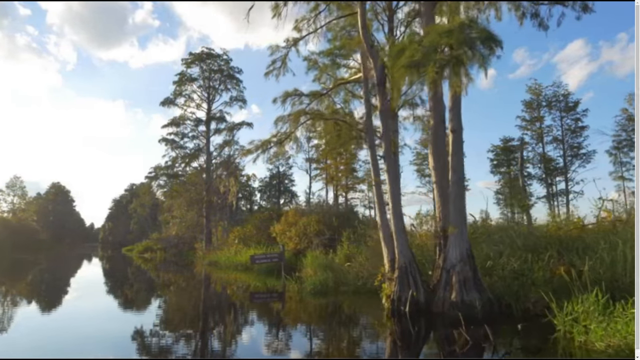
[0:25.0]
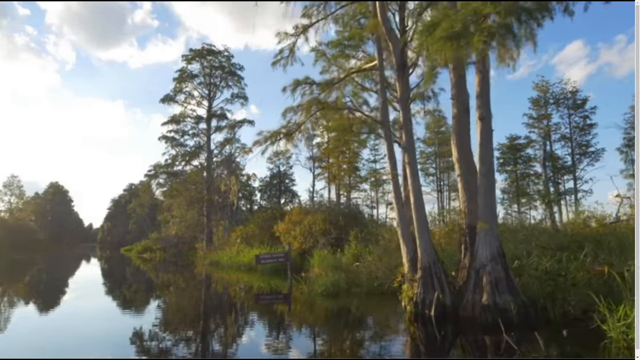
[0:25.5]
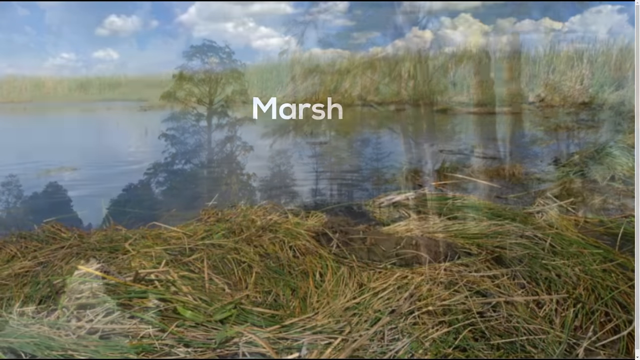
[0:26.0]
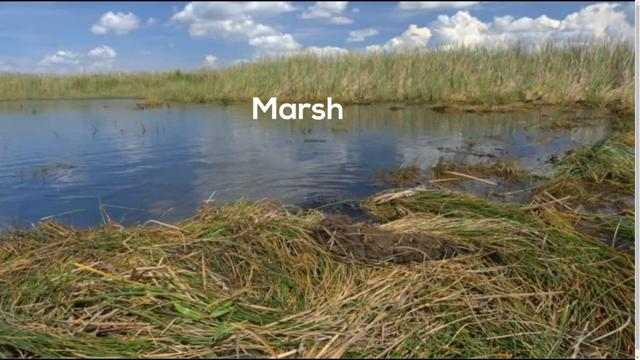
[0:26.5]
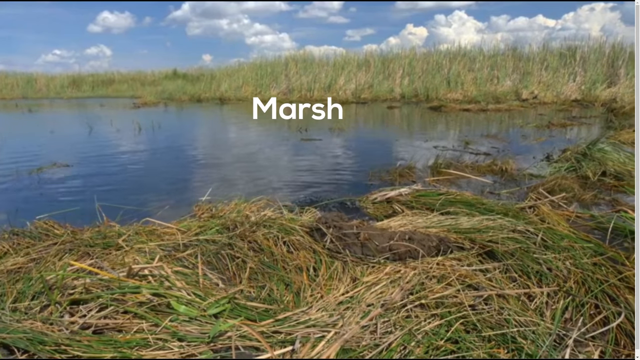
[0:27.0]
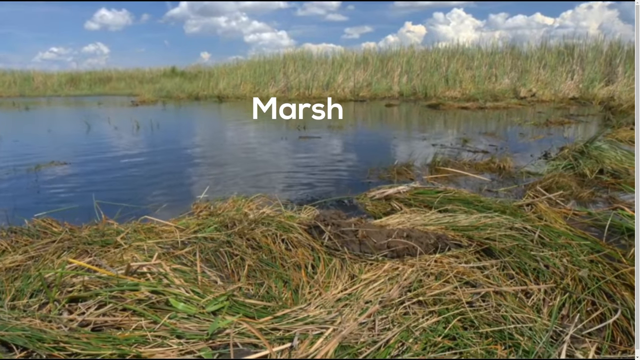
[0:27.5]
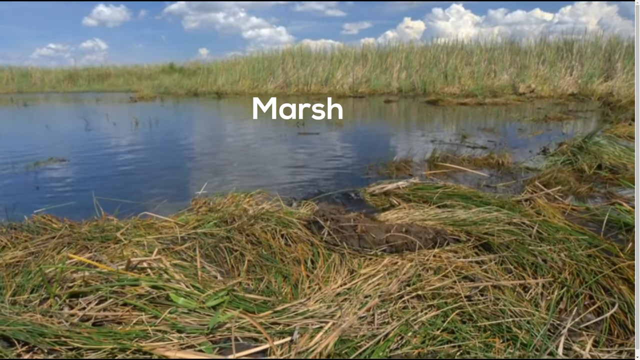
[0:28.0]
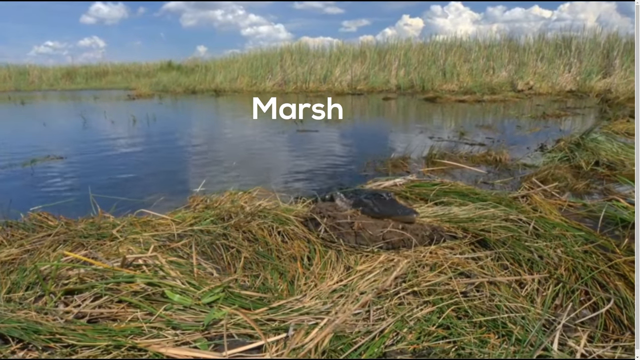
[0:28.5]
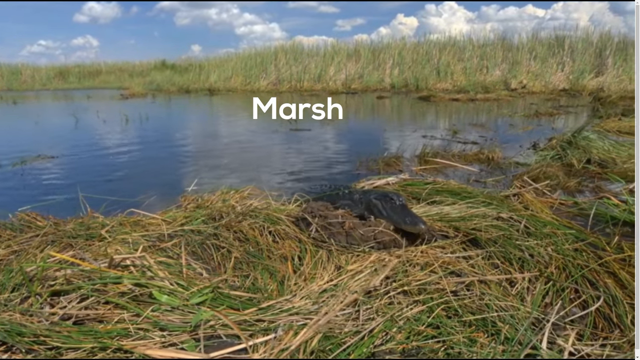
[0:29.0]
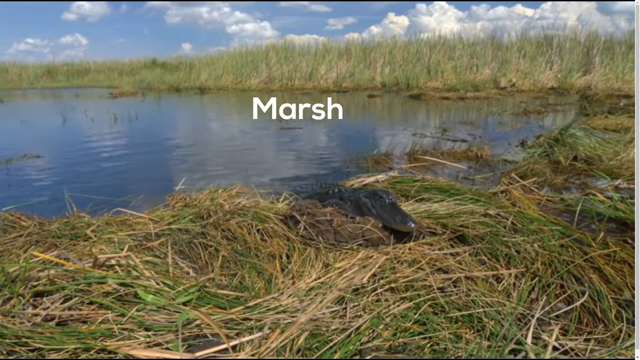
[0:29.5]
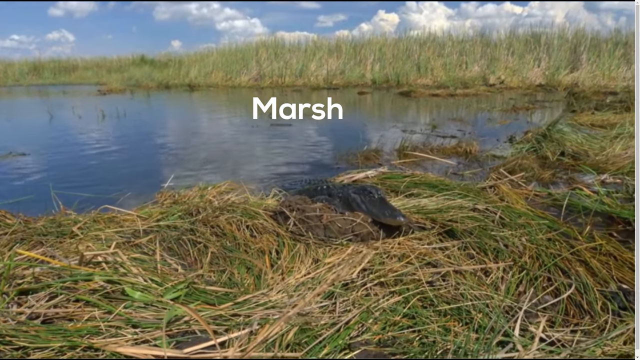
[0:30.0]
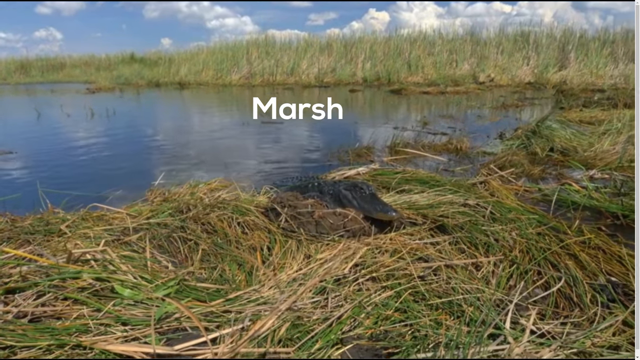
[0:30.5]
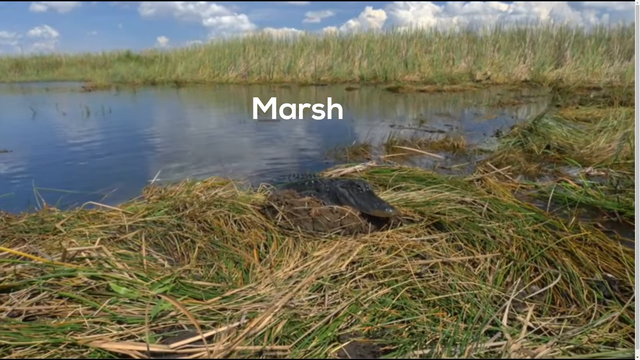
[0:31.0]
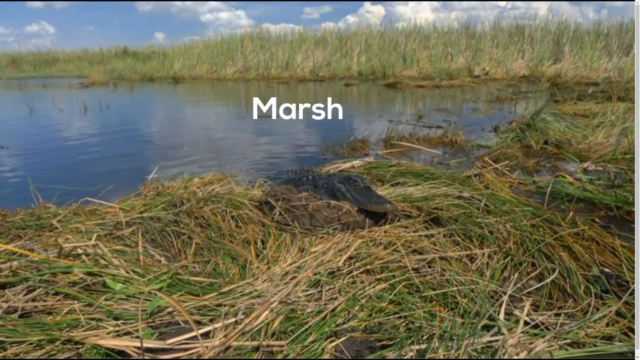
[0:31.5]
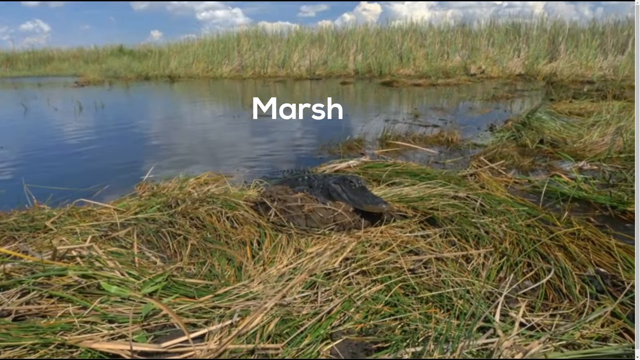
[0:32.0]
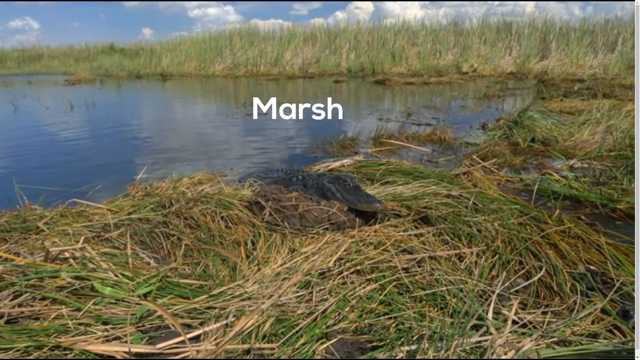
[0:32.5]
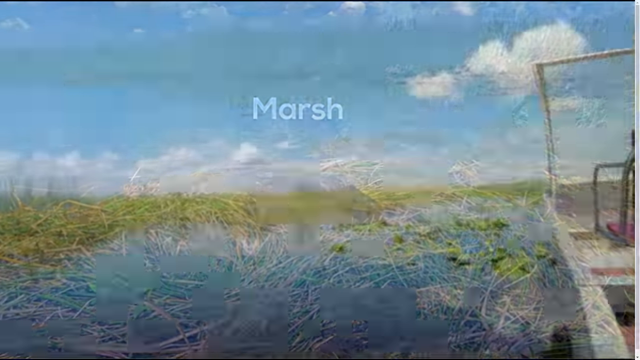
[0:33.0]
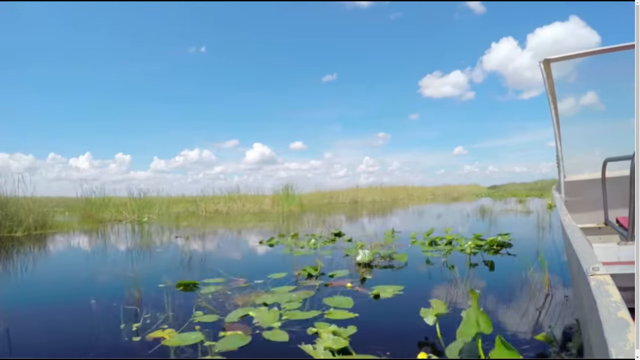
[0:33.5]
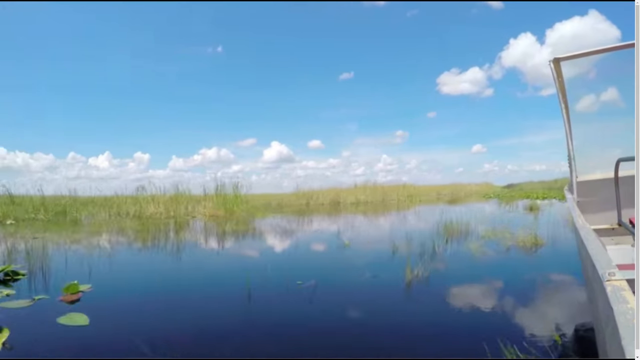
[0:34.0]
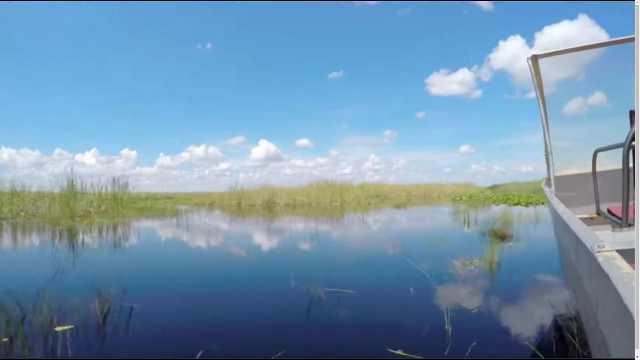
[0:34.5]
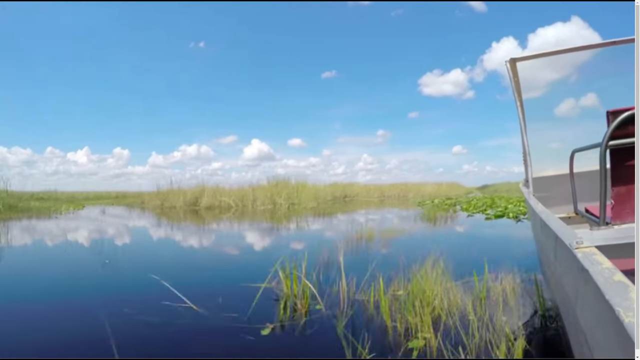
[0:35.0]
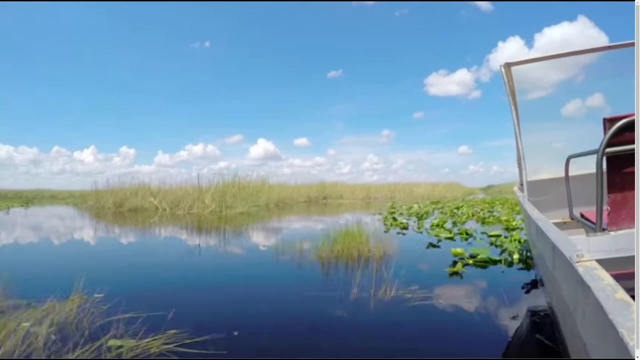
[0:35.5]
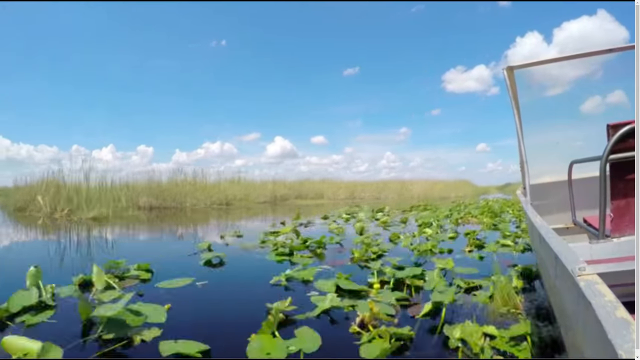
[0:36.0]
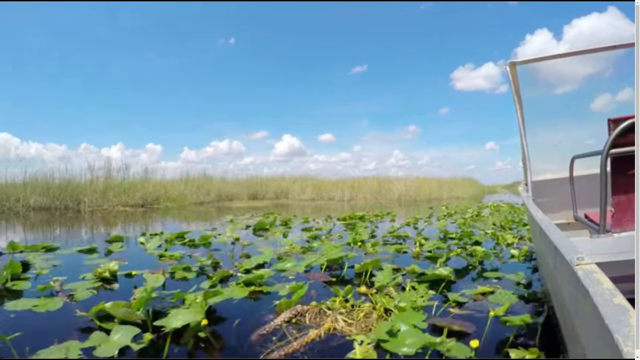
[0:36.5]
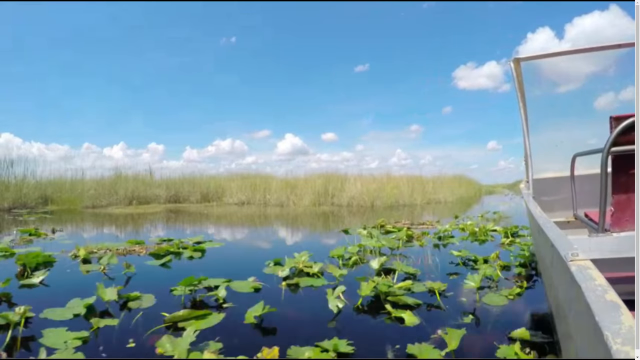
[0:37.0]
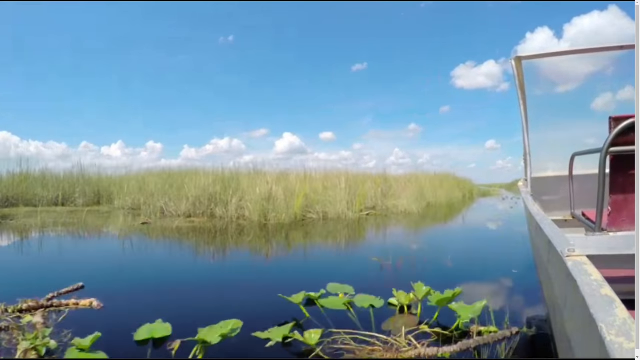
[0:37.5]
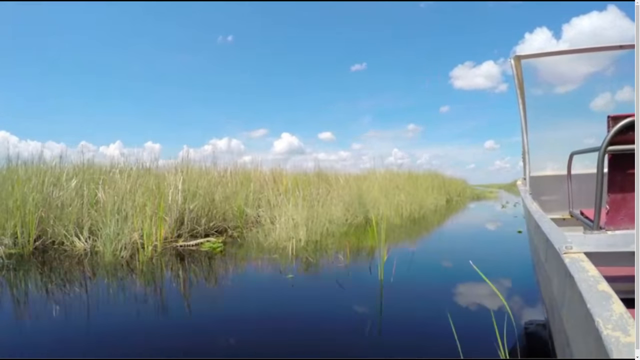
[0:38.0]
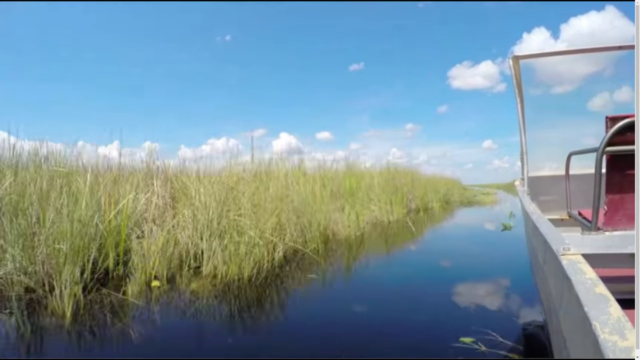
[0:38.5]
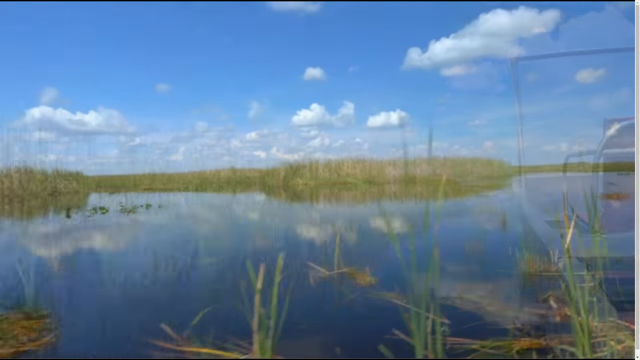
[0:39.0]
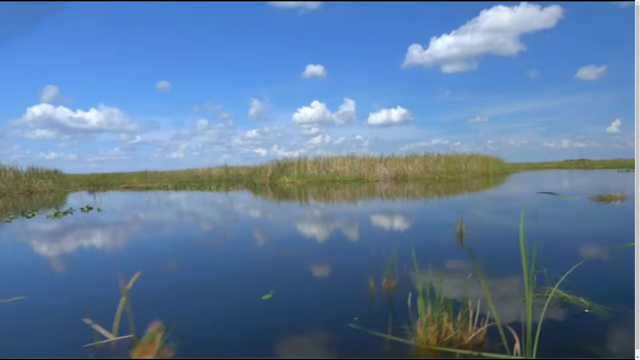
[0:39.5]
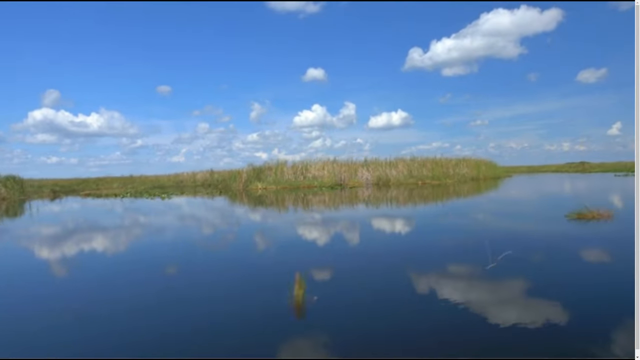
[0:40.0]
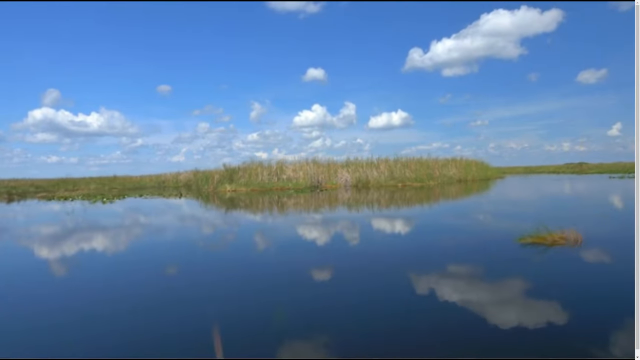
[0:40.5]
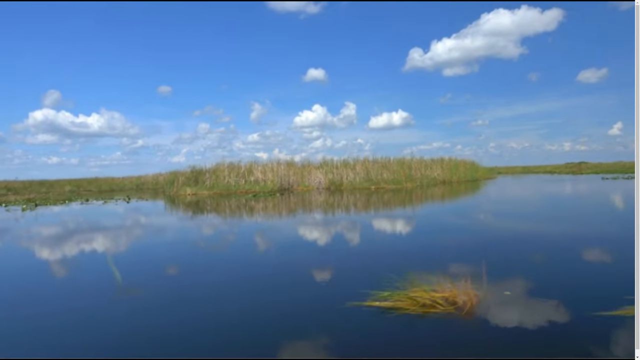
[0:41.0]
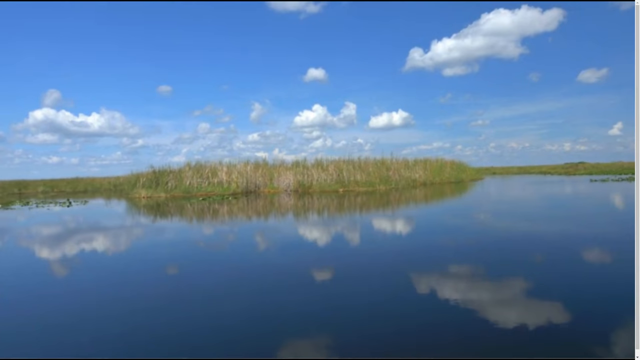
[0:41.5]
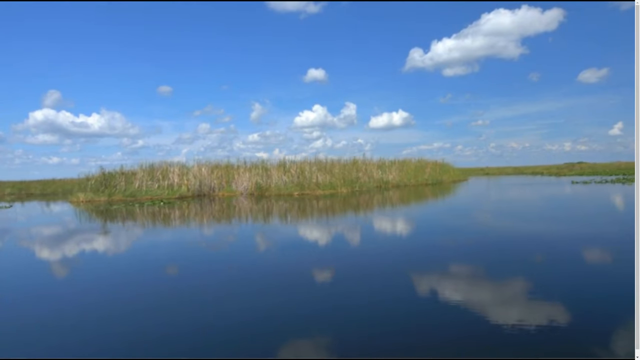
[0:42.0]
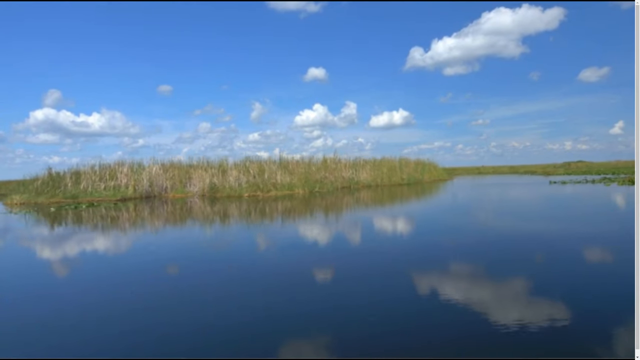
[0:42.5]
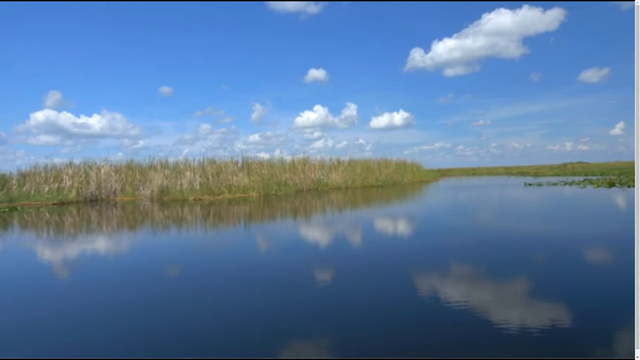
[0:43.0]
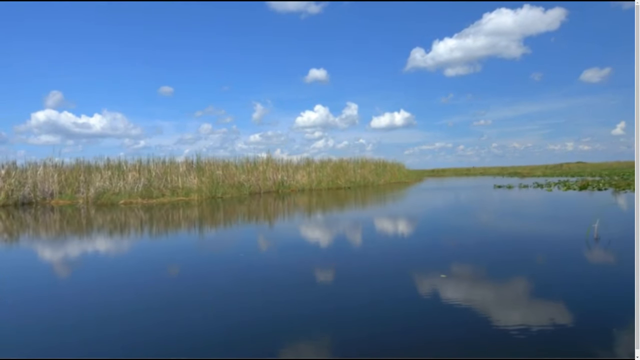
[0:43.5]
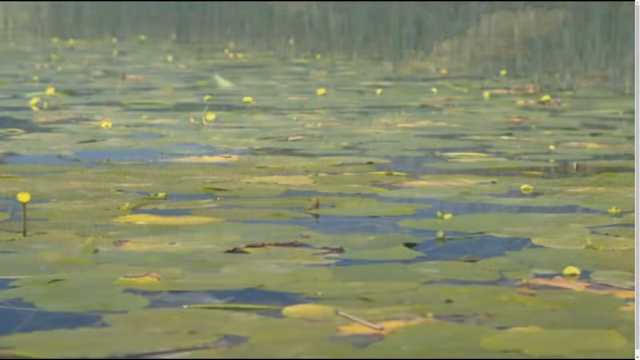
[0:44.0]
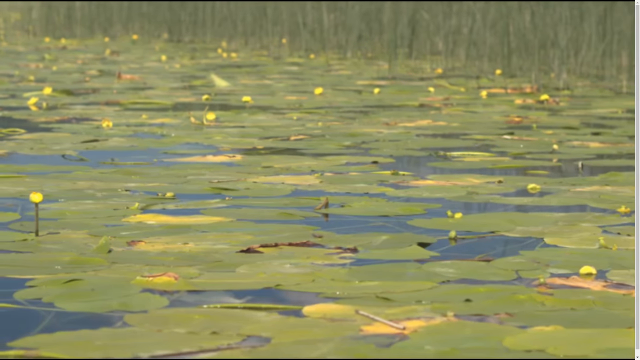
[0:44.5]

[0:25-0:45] The scene begins briefly with a person traveling slowly downstream or downriver before it transitions. A marsh seems to be the focus, and a crocodile or alligator emerges from the water in the marsh. Leaves, foliage, and all types of plants seem to grow out of the water and wetland areas where the crocodile or alligator seems to live. After the crocodile is shown, the person in the boat, which is white, travels down the stream or river about twice as fast as at the beginning. Lily pads appear toward the end.